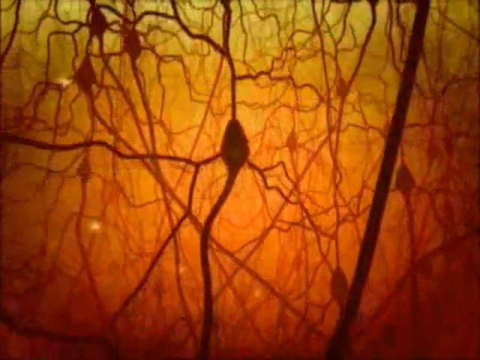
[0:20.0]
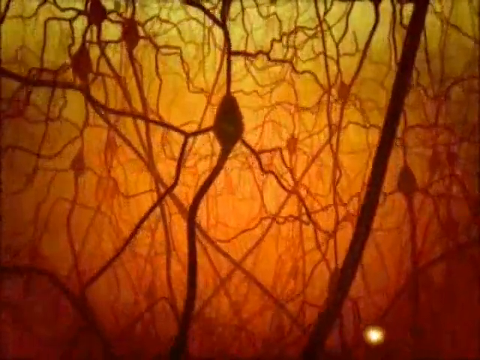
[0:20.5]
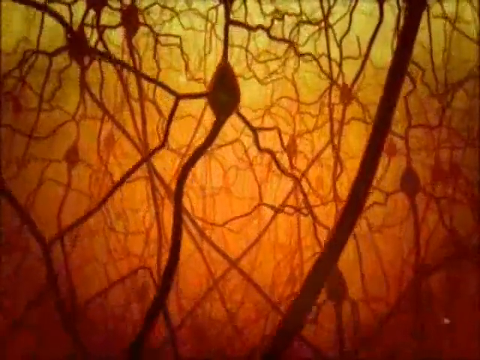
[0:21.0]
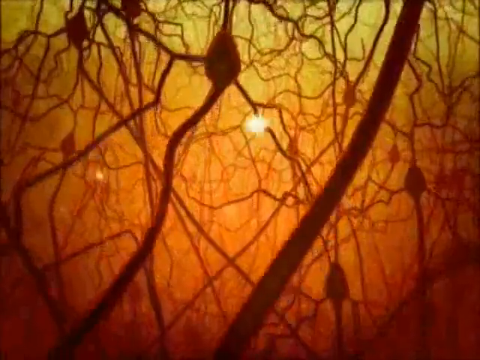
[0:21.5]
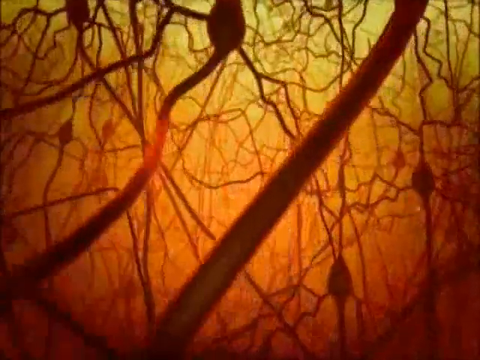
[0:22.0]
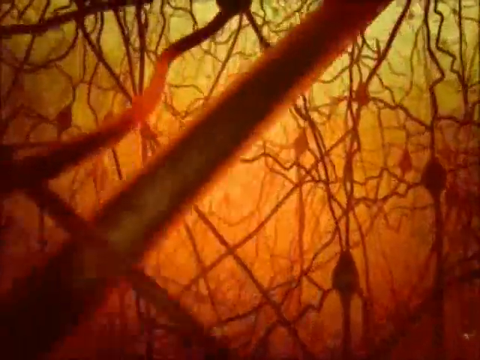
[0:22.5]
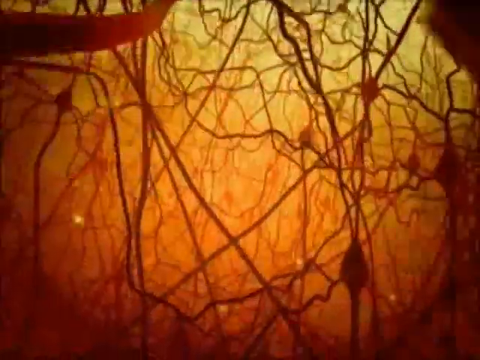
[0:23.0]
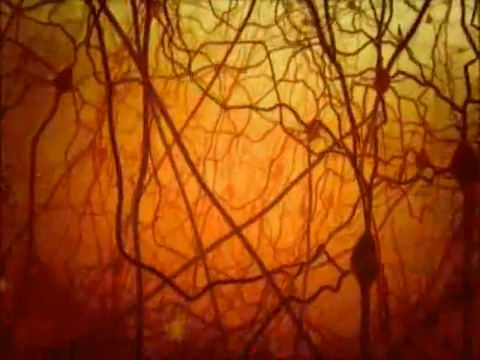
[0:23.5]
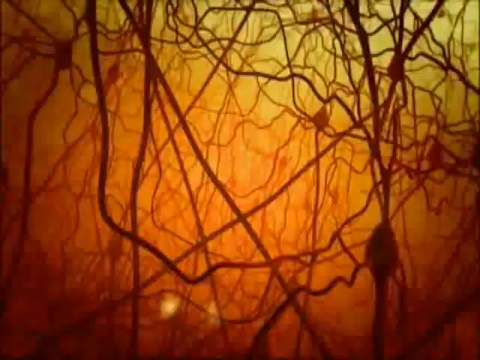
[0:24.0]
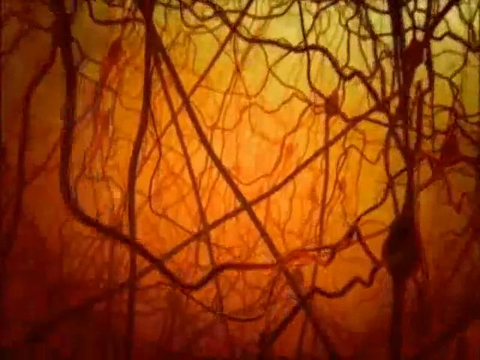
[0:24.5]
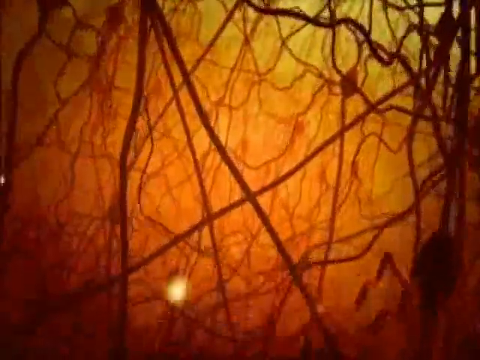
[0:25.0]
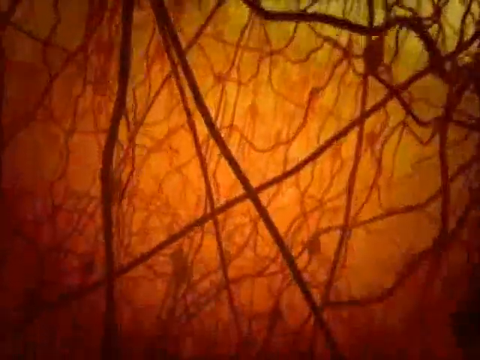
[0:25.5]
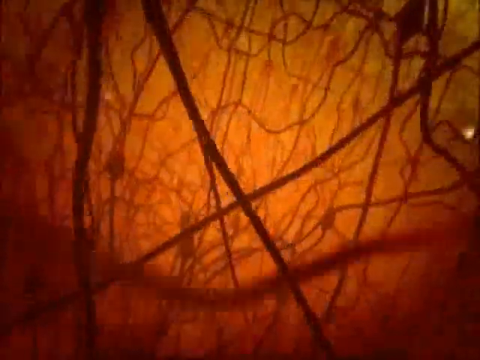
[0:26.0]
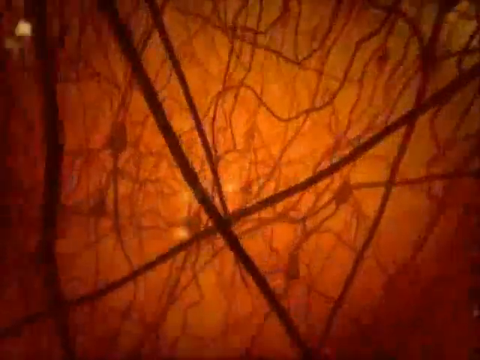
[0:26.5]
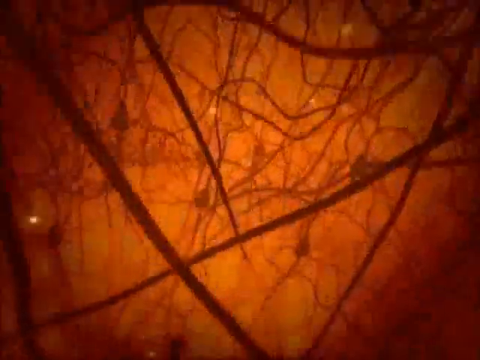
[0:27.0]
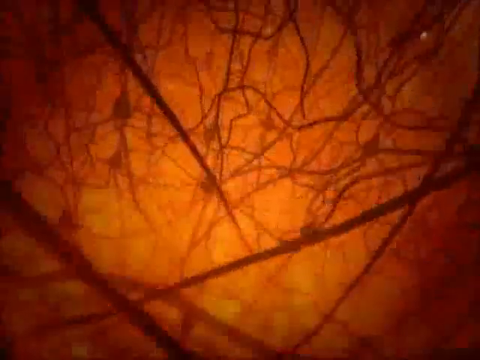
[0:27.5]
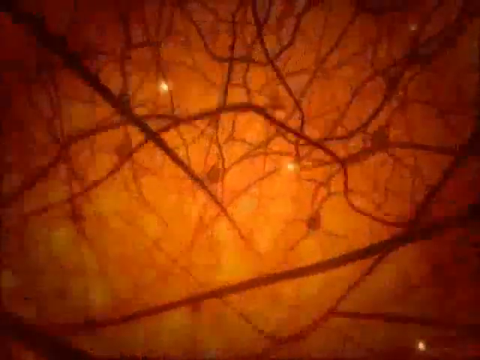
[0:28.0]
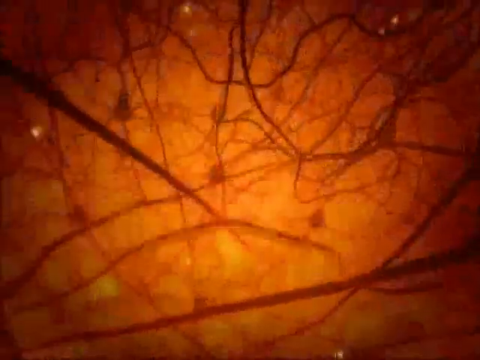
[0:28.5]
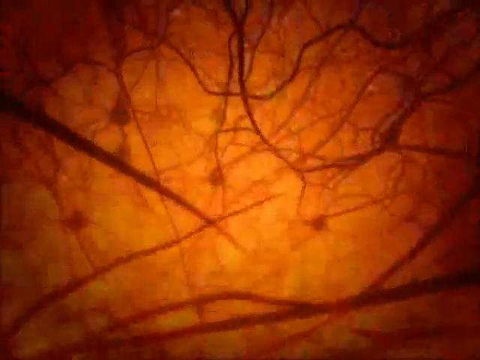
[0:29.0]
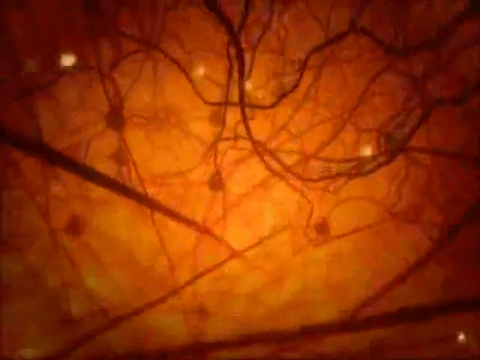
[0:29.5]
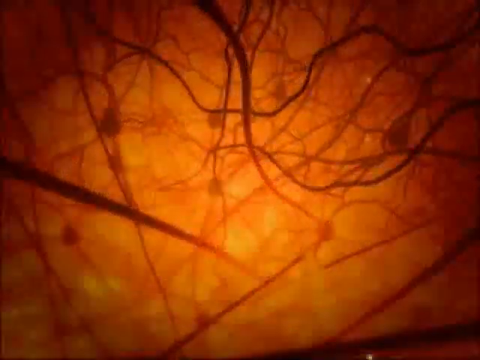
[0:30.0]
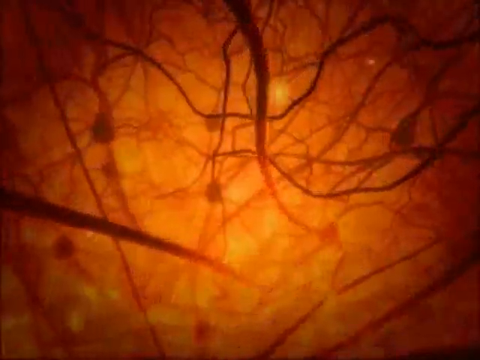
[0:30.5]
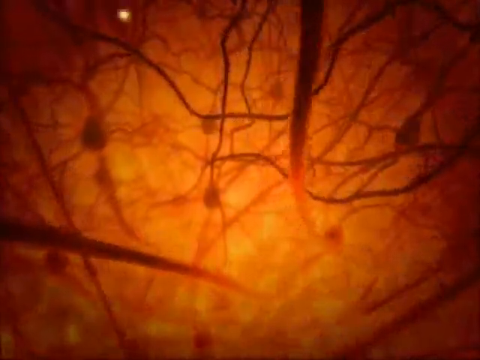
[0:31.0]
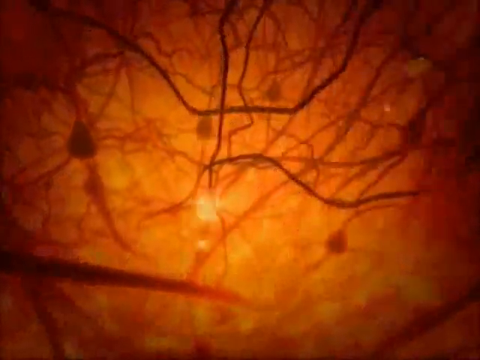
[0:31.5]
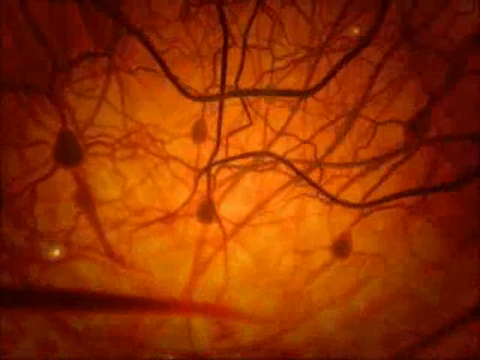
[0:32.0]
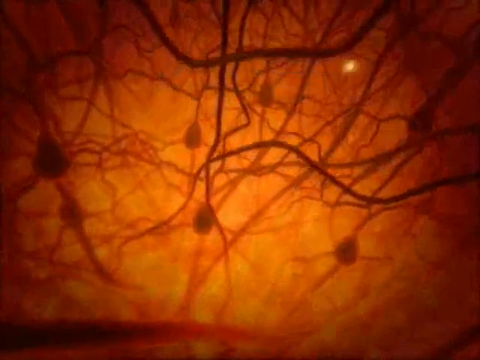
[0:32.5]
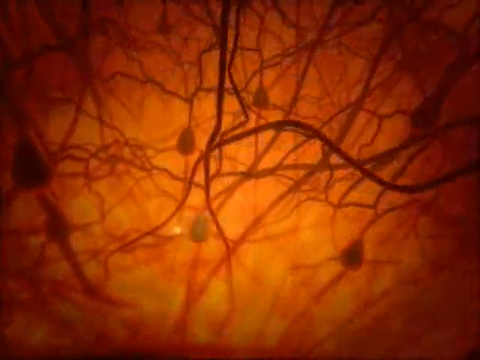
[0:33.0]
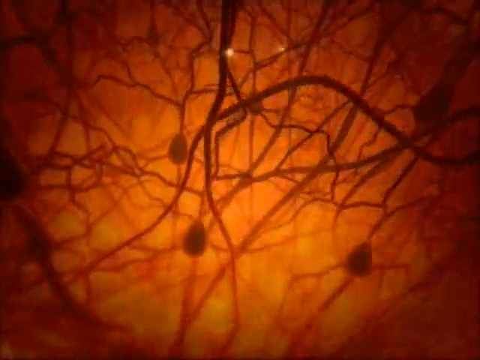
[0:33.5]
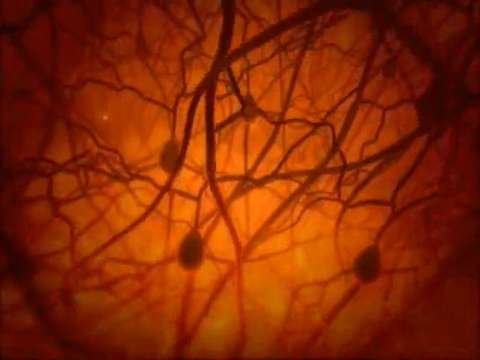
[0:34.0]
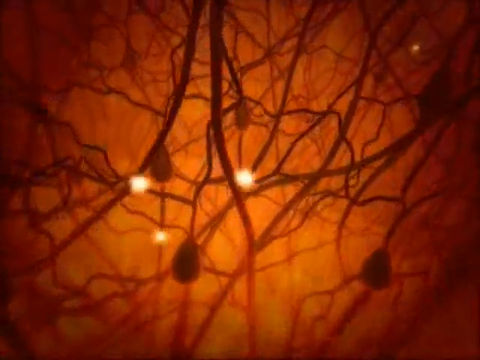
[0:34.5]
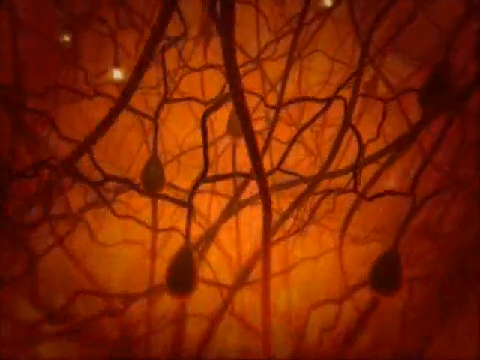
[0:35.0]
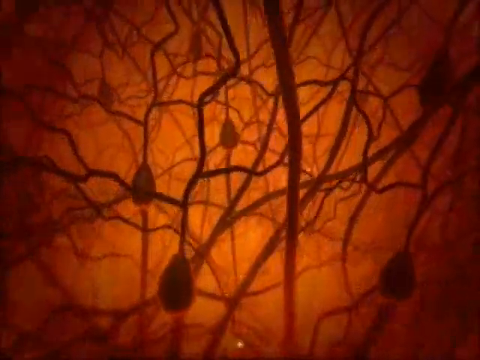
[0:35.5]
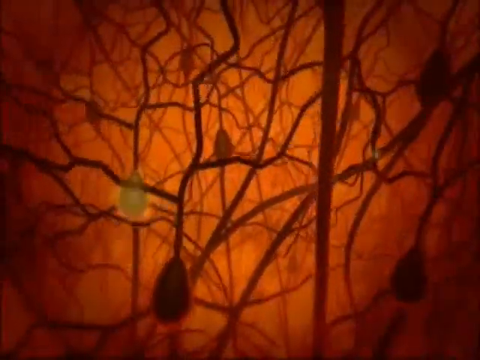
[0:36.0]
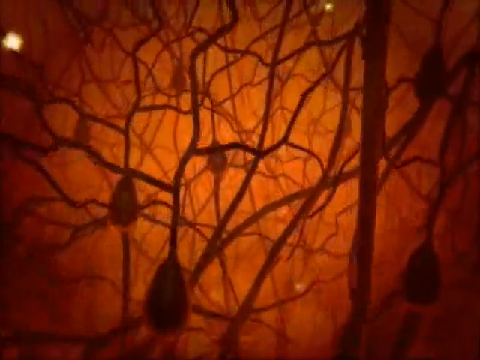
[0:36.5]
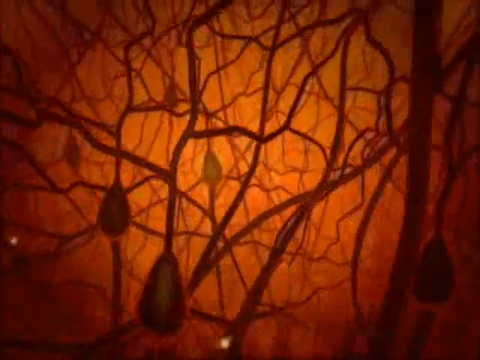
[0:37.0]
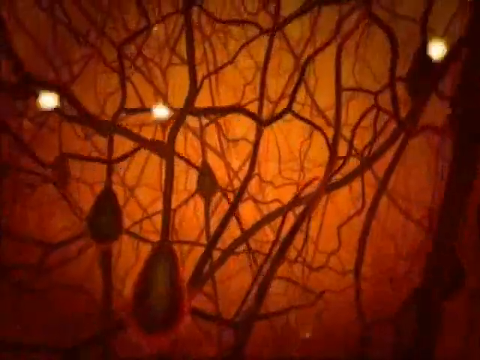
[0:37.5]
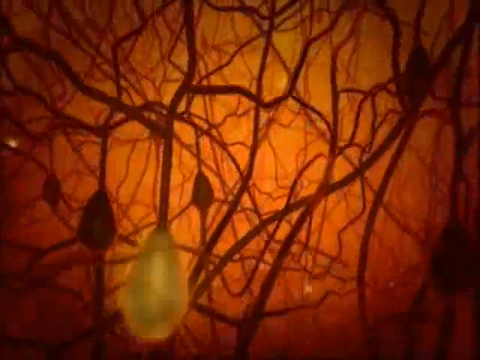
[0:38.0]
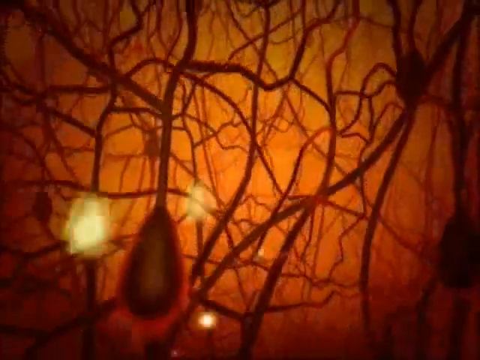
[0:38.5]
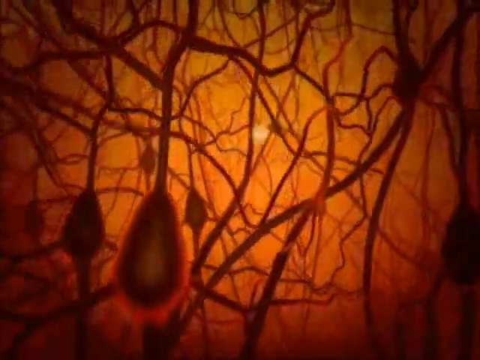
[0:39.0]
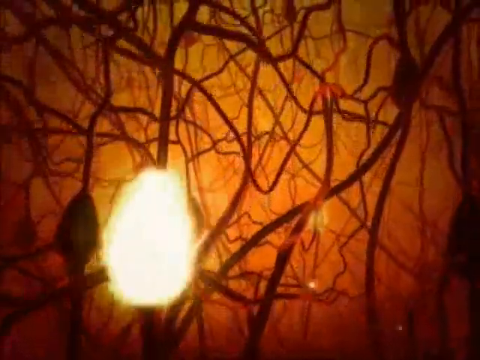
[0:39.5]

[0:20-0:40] The camera continues to float around through the strands as yellow orbs of light travel down their lengths. As the camera goes down, they get denser and denser; some strands are a little thicker than others, and some are very thin. The camera then appears to start pivoting downward as the whole scene rotates around it, almost like looking down into a pit of lava with a yellow-orangish glow. When the yellow orbs of light traveling along the strands reach one of the bulb shapes, they stop and pulse once with a really bright glow before disappearing.